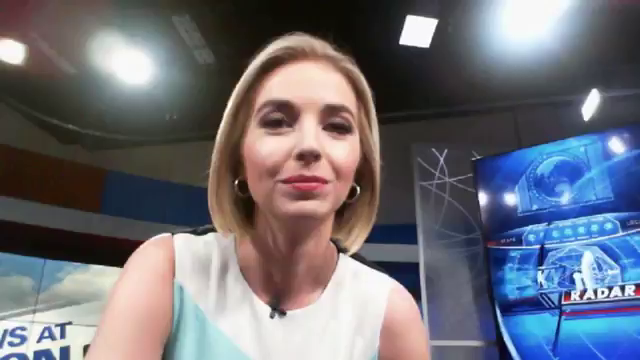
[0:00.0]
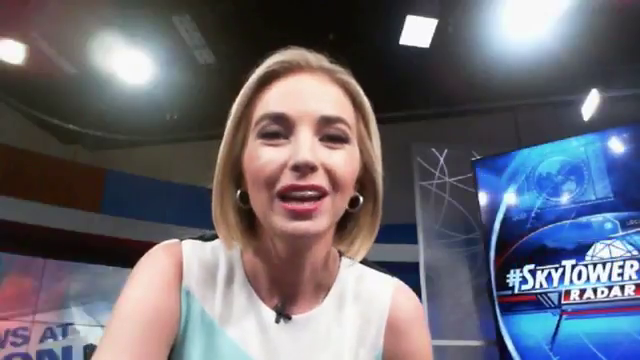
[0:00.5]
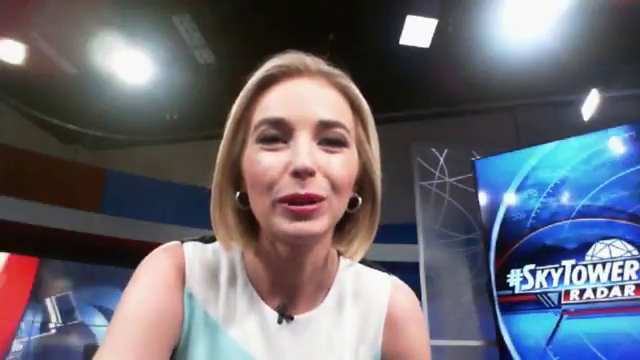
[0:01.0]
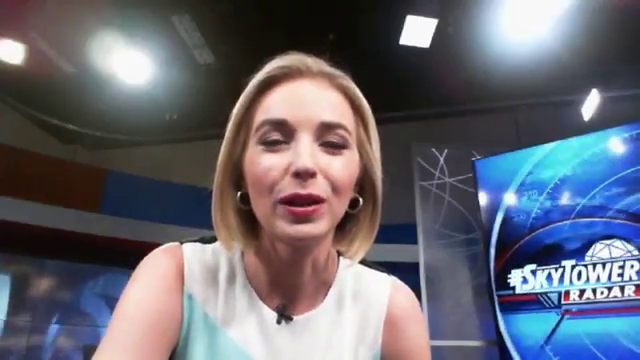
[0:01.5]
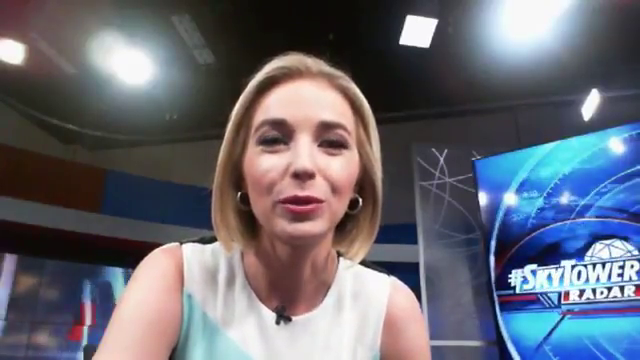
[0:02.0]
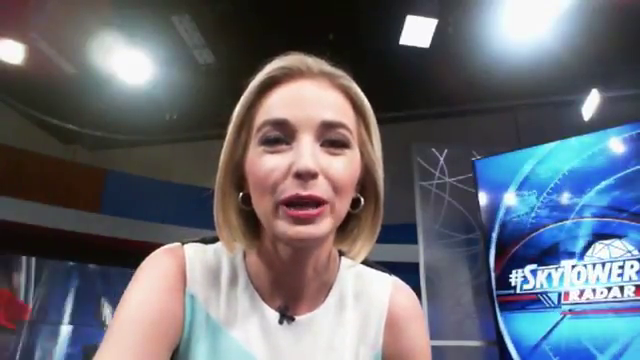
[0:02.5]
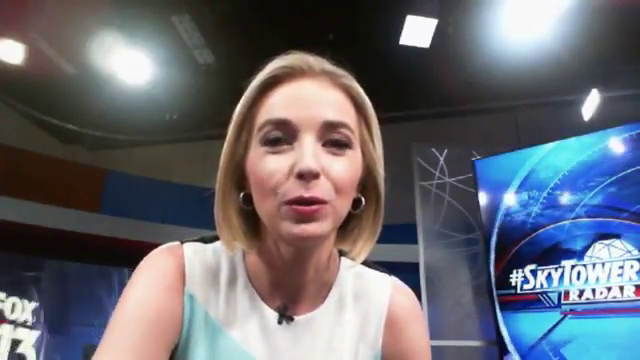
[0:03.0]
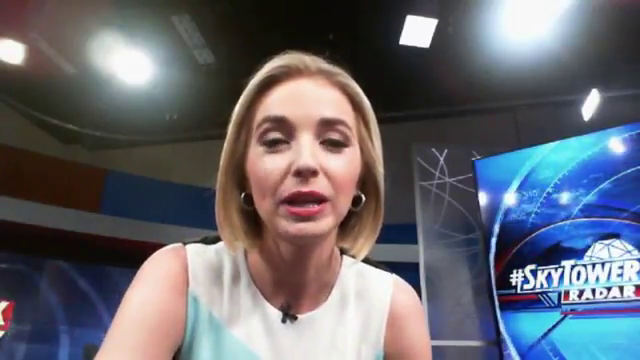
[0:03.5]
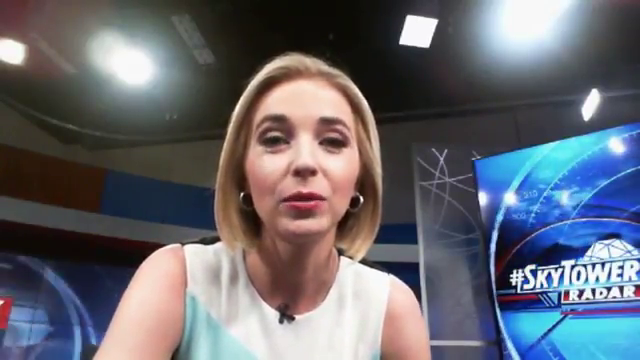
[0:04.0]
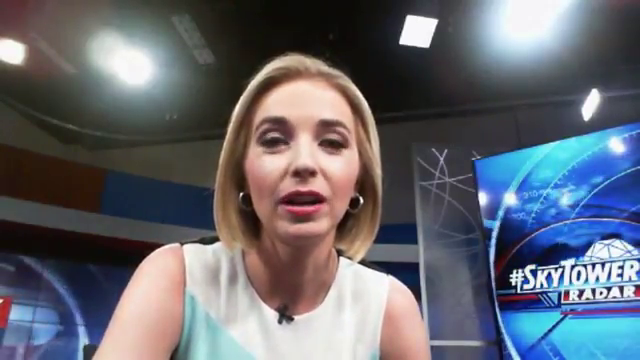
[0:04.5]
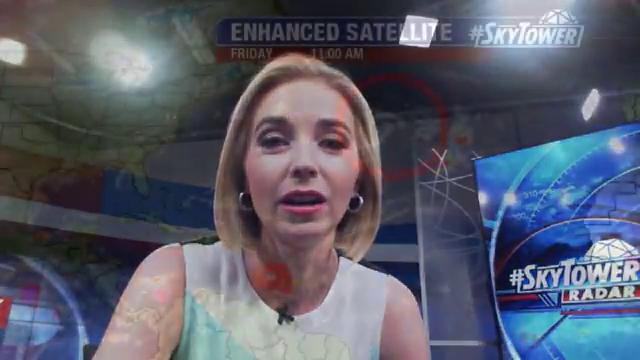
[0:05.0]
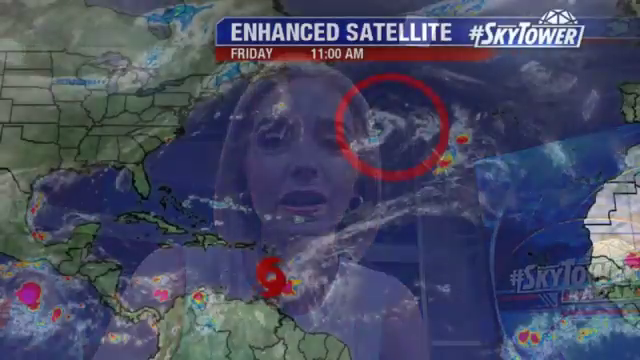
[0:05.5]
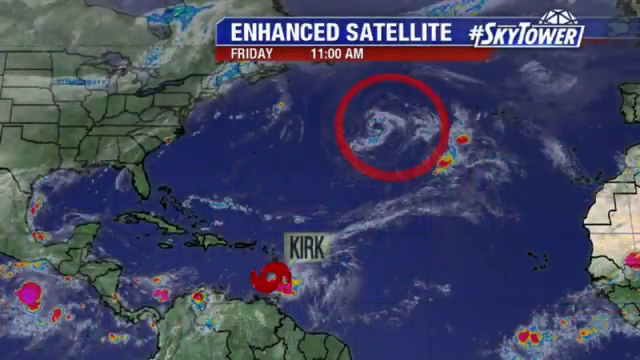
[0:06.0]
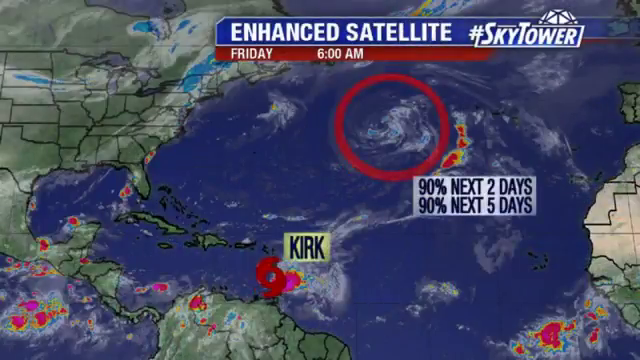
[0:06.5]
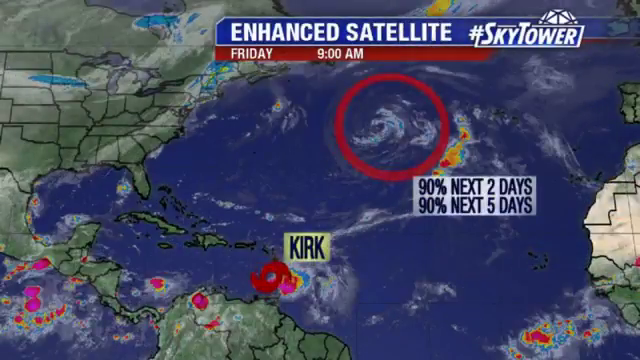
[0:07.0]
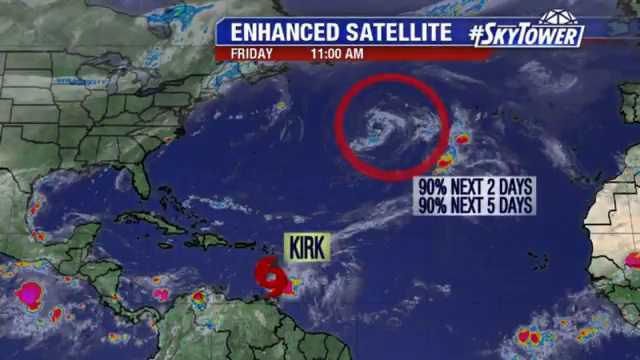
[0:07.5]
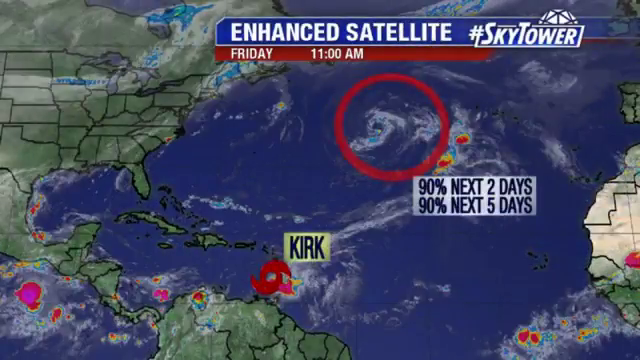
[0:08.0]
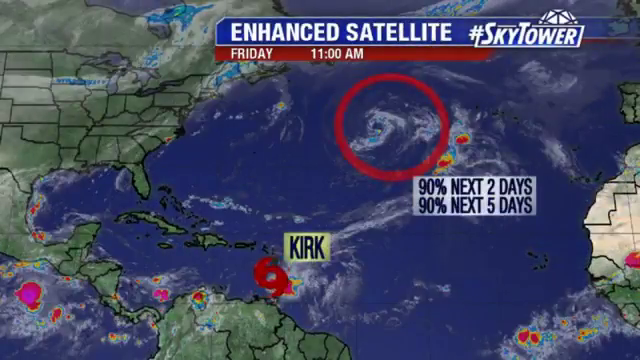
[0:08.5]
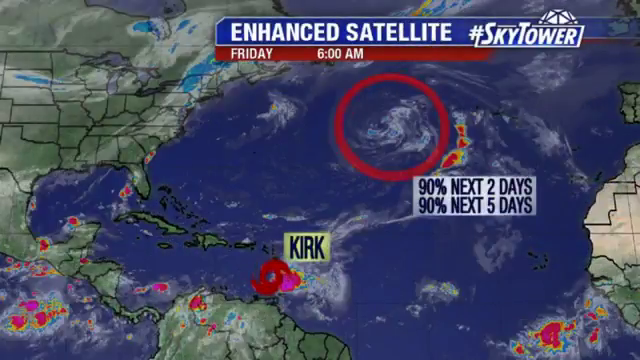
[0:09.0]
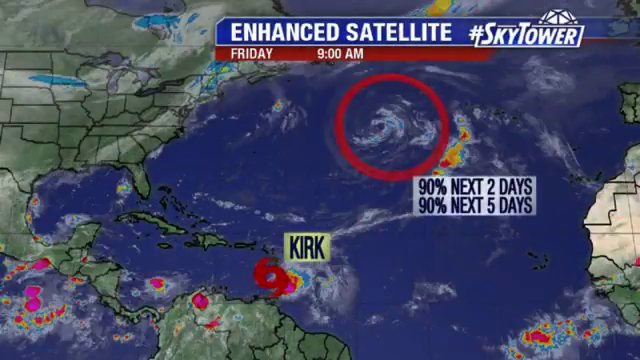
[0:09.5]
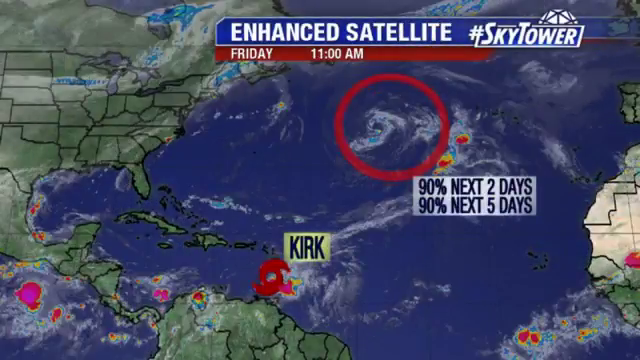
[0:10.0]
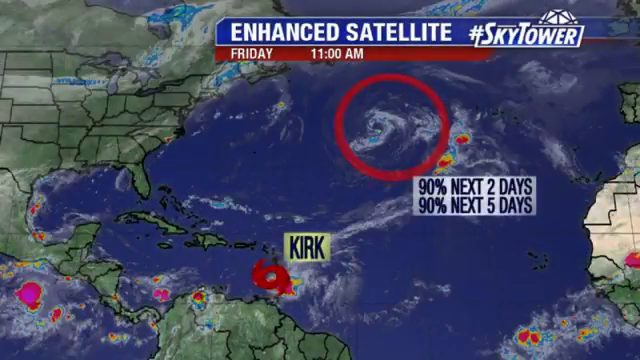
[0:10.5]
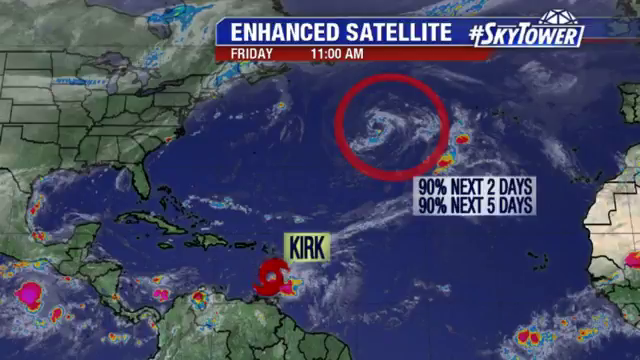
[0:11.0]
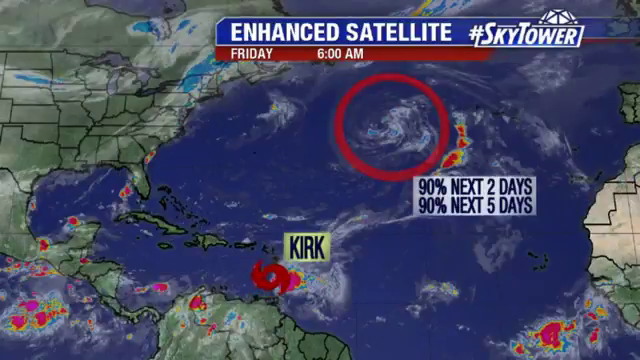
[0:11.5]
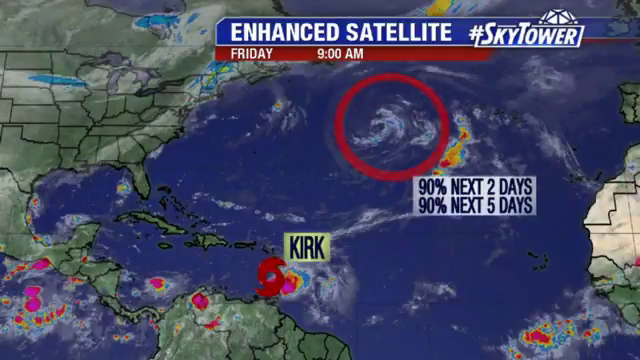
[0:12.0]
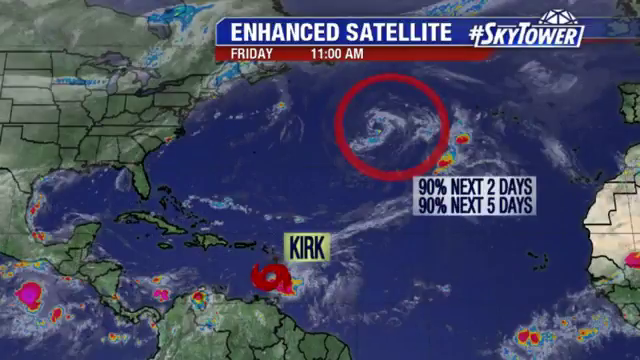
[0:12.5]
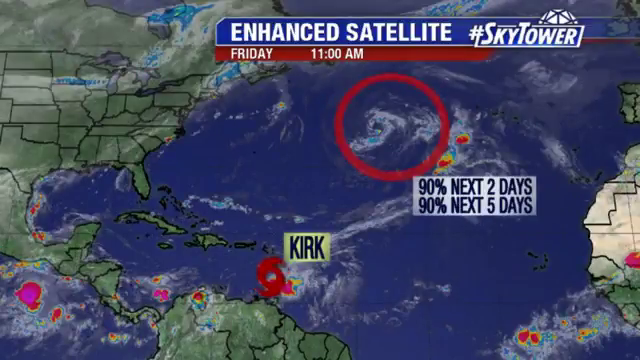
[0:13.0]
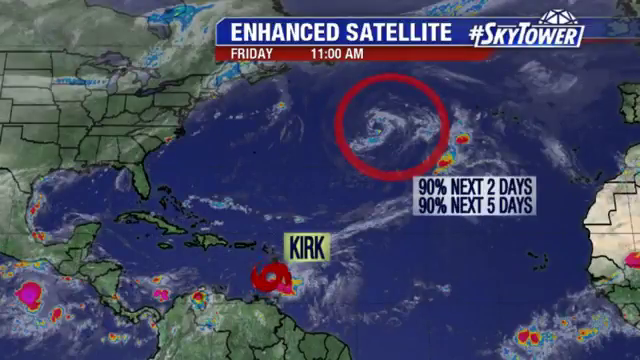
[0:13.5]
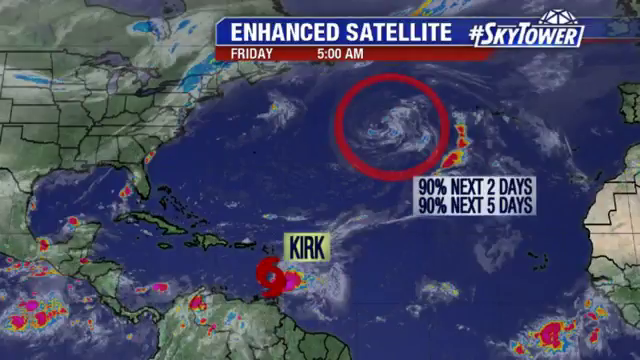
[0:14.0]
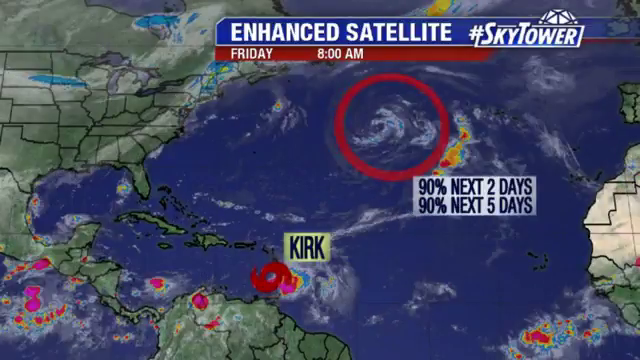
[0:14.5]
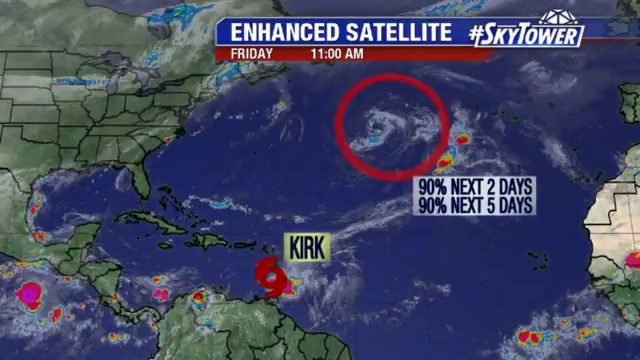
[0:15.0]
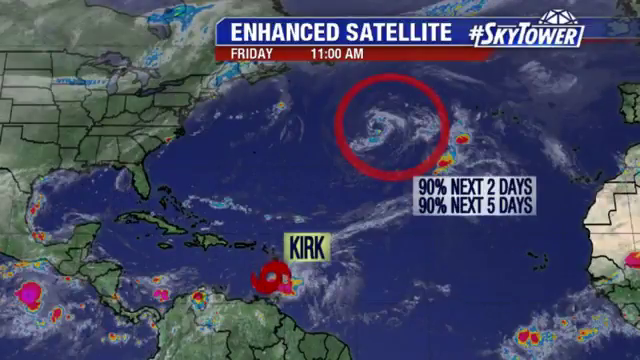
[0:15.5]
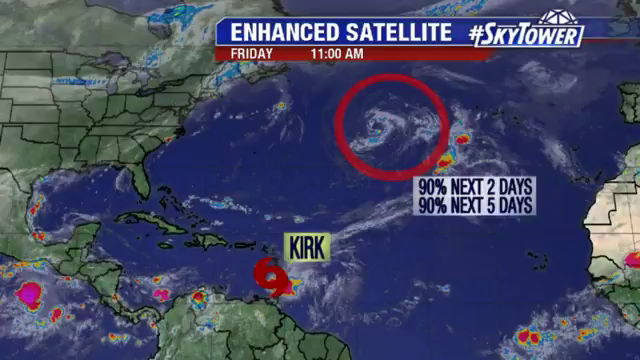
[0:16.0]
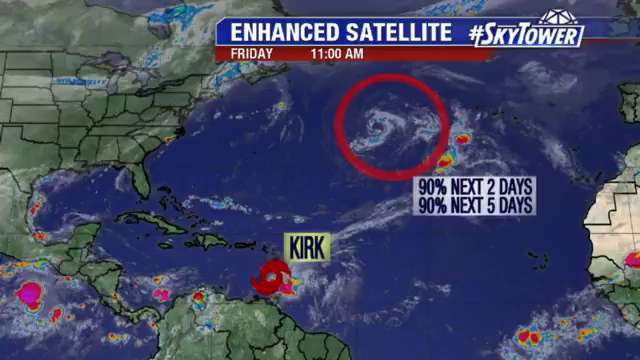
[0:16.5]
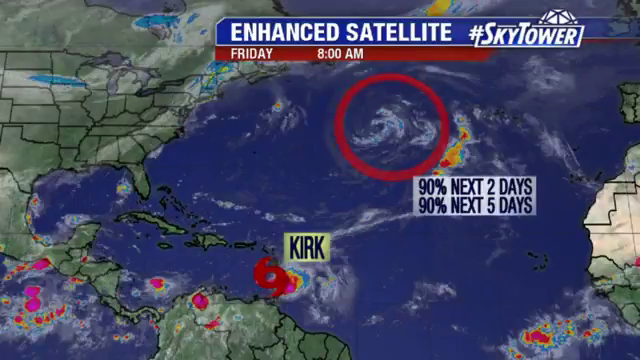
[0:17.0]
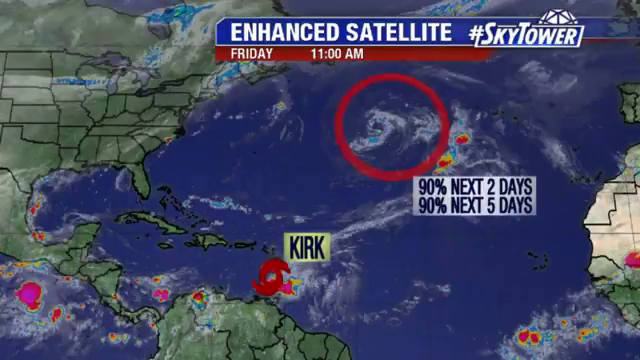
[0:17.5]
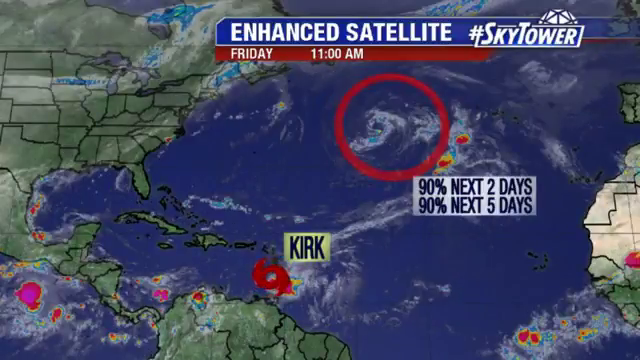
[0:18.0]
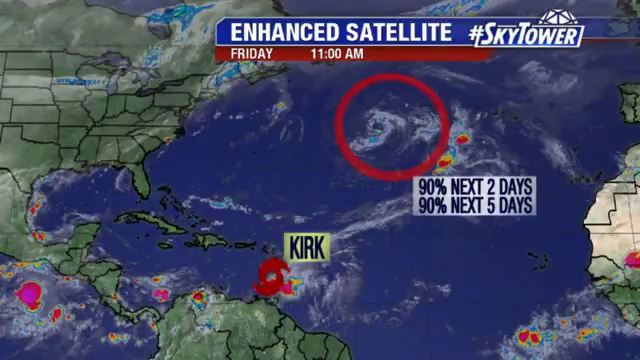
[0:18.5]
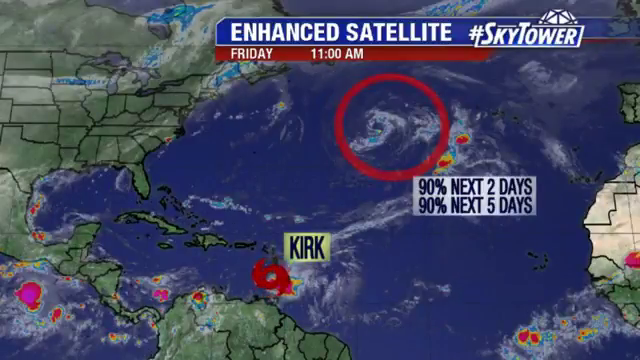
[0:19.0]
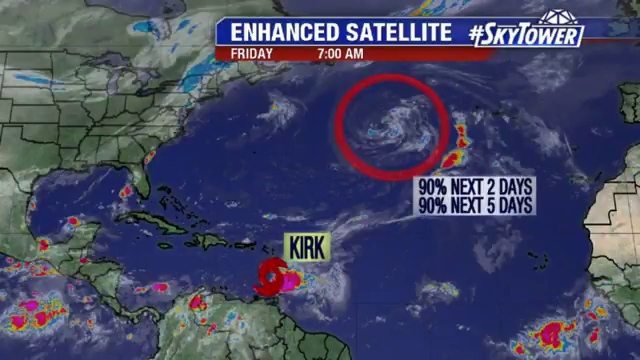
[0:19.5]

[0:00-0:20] A woman with blonde hair is in the middle of the screen, talking to the camera. She has quite prominent cheeks and quite small facial features, and she wears a white vest. She is in the middle of a studio; over her right shoulder is some red and blue colouring, and over her left shoulder is a TV screen or large screen with a blue background that says "Sky Tower radar". The screen then fills with a weather report. Text at the top reads "enhanced satellite" and "#Sky Tower", and the time of the report is Friday at 11 a.m. The United States of America is on the left side of the image, the western edge of Africa is on the far right, and a little tip of Portugal and some of the United Kingdom and Ireland are visible. In the middle of the image a storm is beginning, represented by a red circle, apparently called Kirk. Next to where it says "Kirk" is a small red shape rotating anti-clockwise; it looks like two symmetrical number nines conjoined. Meanwhile, clouds swirl across the Atlantic Ocean.